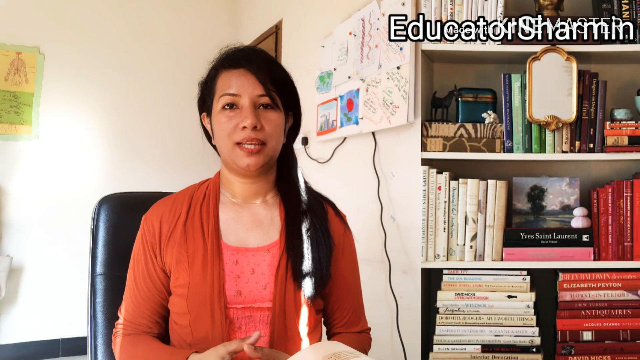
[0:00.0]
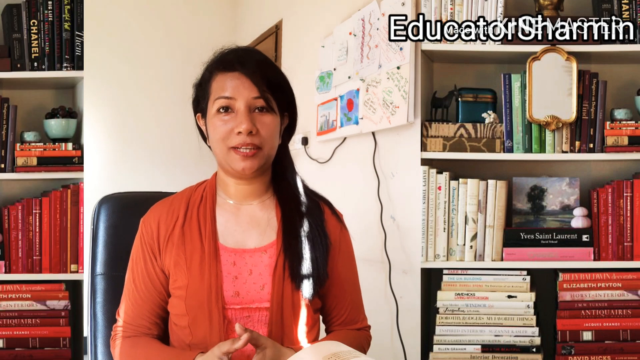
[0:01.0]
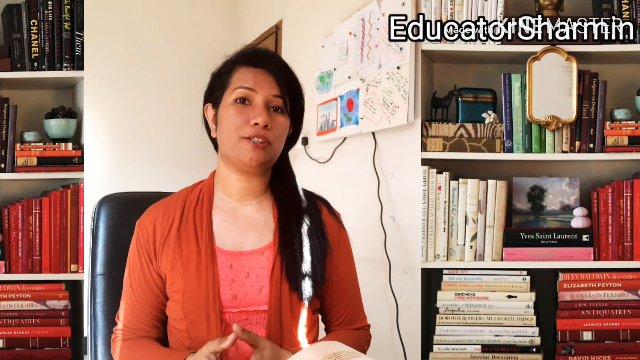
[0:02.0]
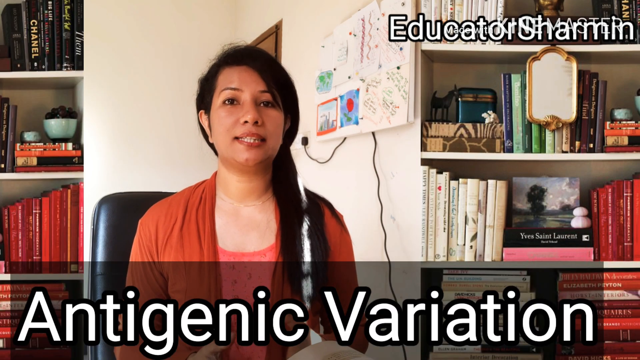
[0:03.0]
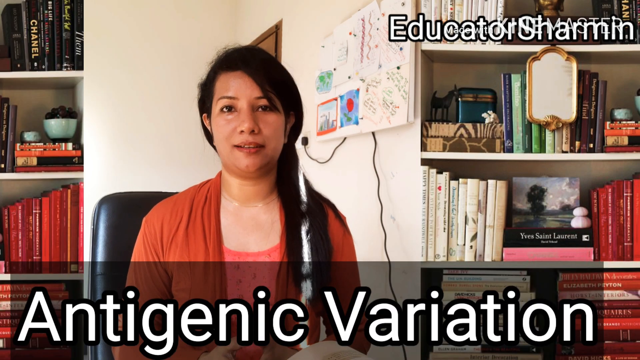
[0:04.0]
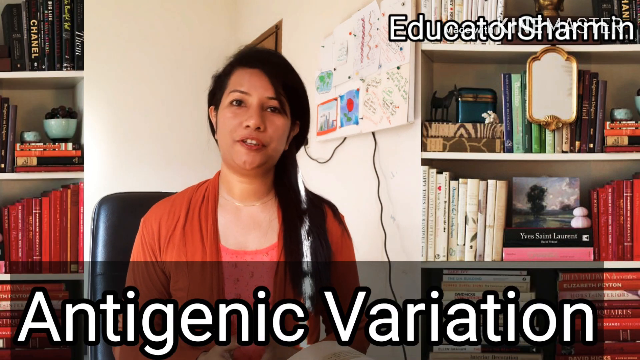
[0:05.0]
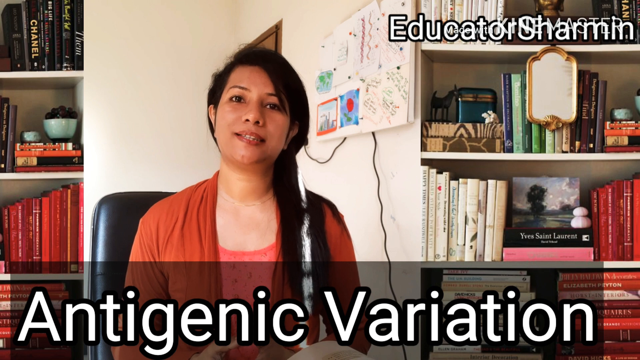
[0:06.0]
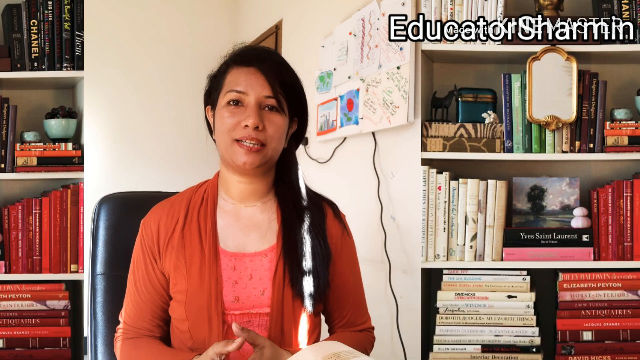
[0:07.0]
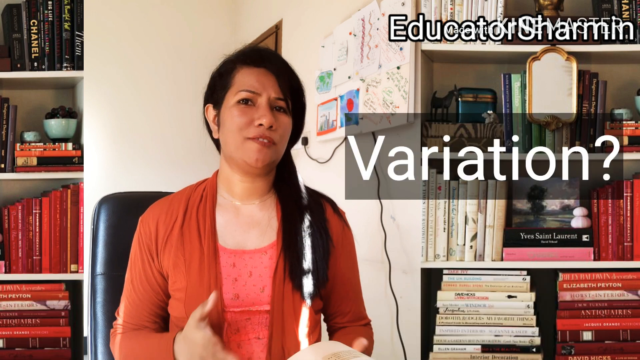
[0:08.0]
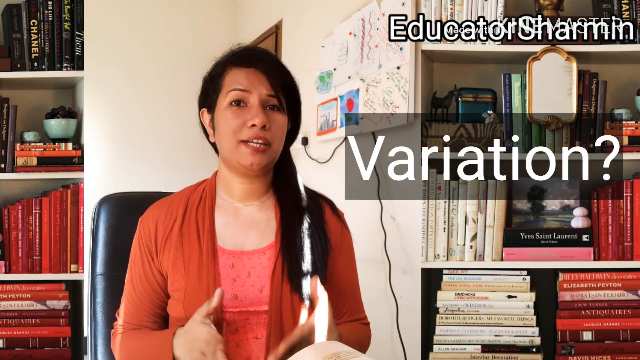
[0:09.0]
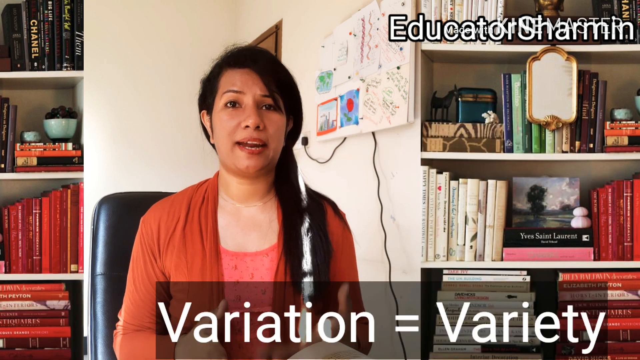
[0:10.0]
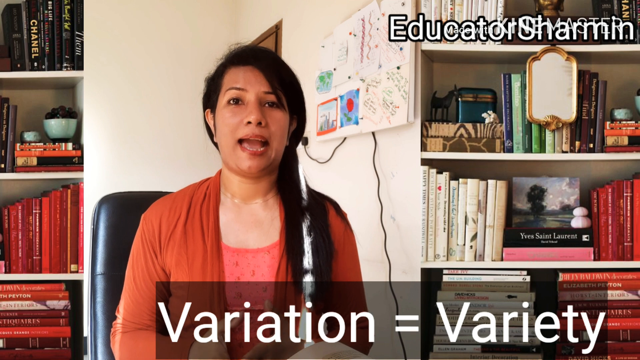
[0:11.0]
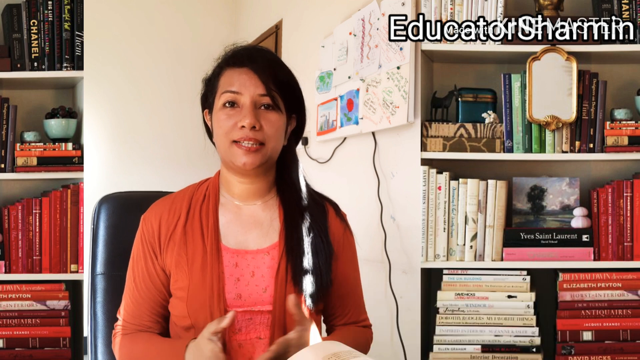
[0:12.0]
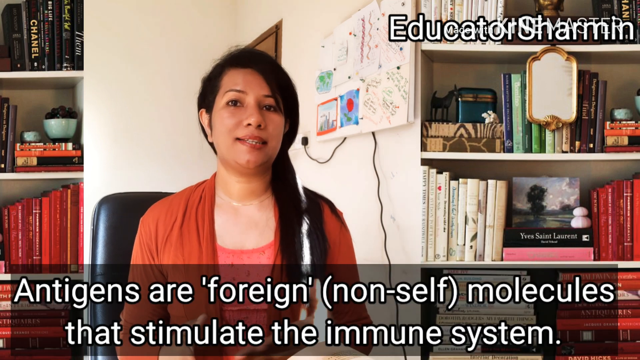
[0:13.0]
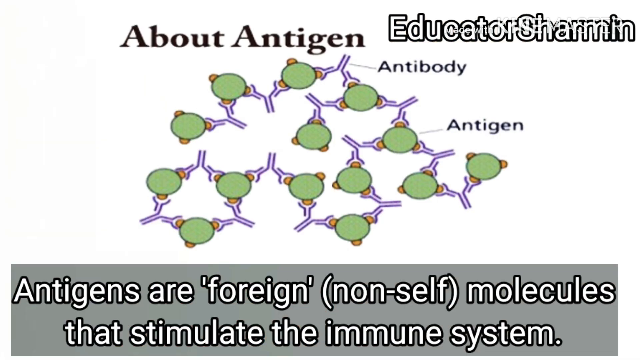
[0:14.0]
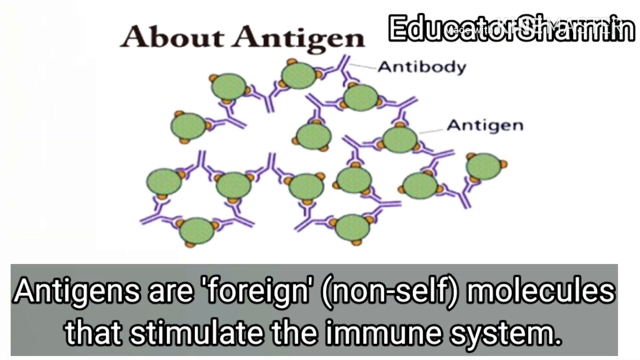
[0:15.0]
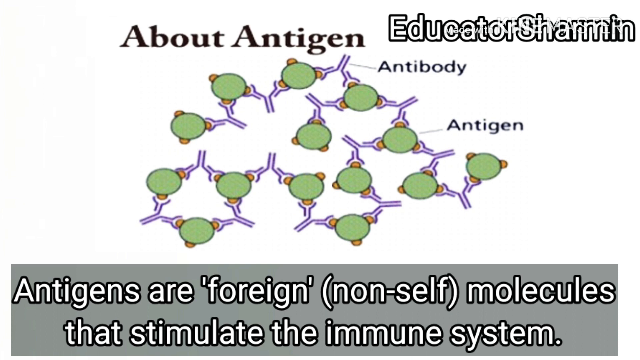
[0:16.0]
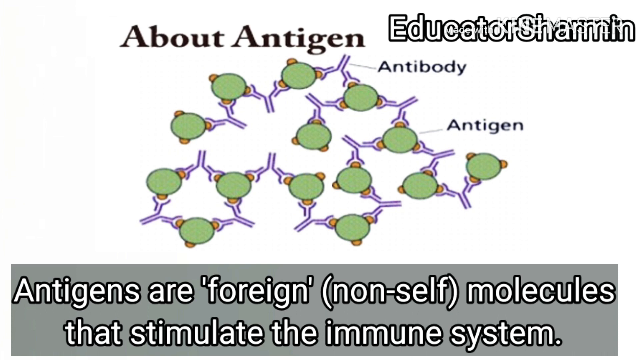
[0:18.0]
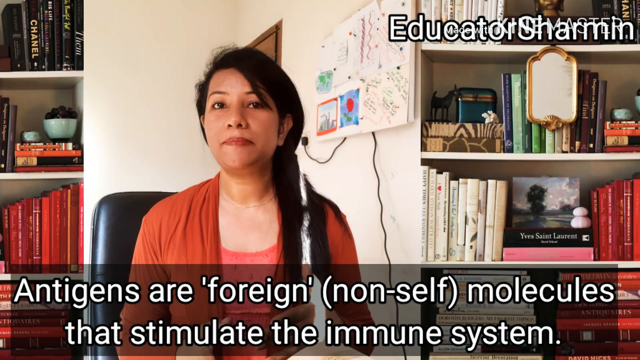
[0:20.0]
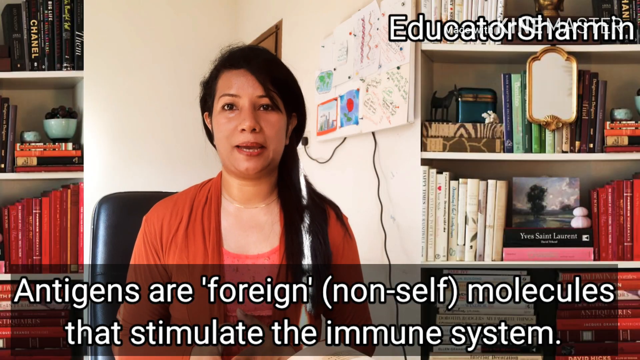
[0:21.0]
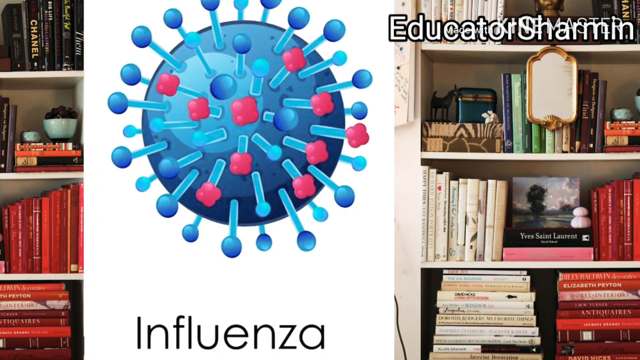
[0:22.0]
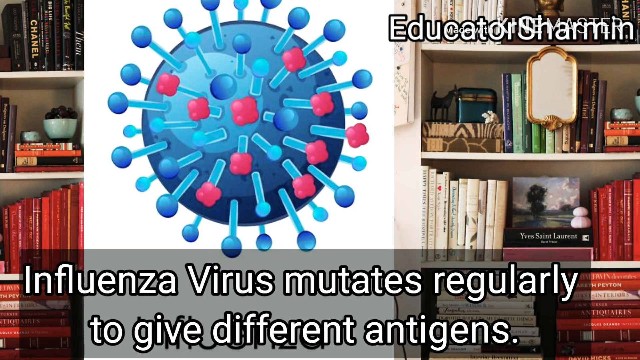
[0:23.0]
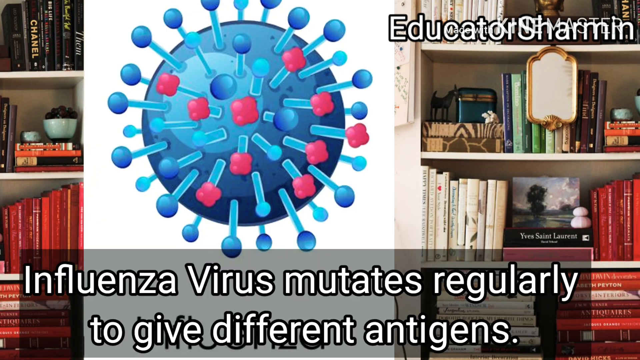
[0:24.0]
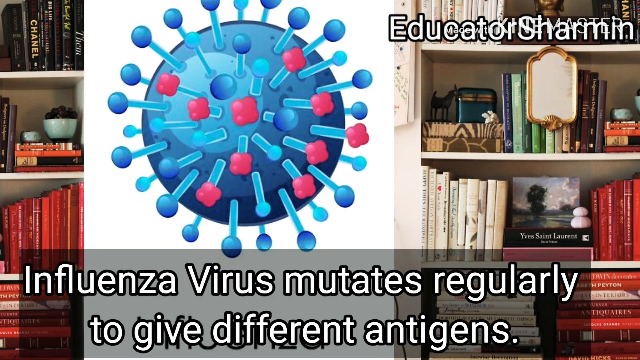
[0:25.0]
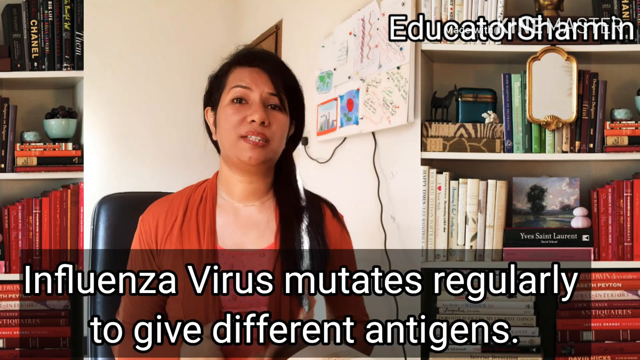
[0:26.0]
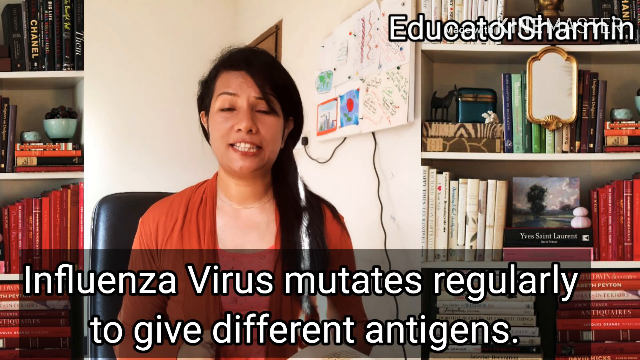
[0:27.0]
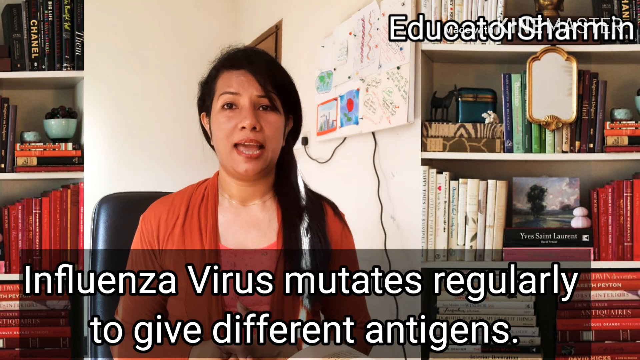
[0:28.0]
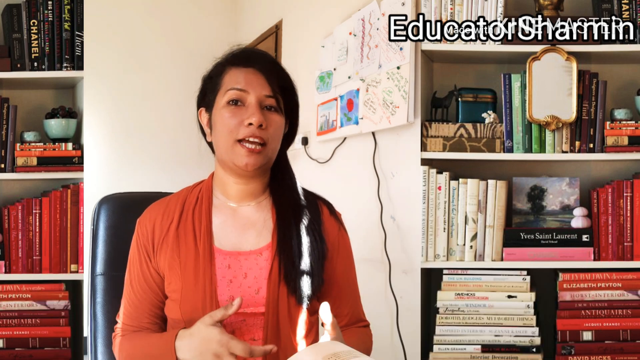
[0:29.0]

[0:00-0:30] A woman wearing a pink blouse and an orange jacket sits on an office chair in a room with a bookshelf full of books. She has long dark hair. The title of the video reads "Antigenic Variation," and the top right corner reads "Educator Sharmin." A question appears on screen: "Variation?" Another piece of information pops up reading "Variation = variety." A presentation slide then reads "About antigen, antibody, antigen. Antigens are foreign non-self molecules that stimulate the immune system." A picture labeled "Influenza" shows a cartoon image of influenza, with text reading "Influenza virus mutates regularly to give different antigens." Briefly, a slide appears reading "Antigen bacteria, antibodies, special cell that eats antigens. Memory cells will still recognize them and start secondary response."